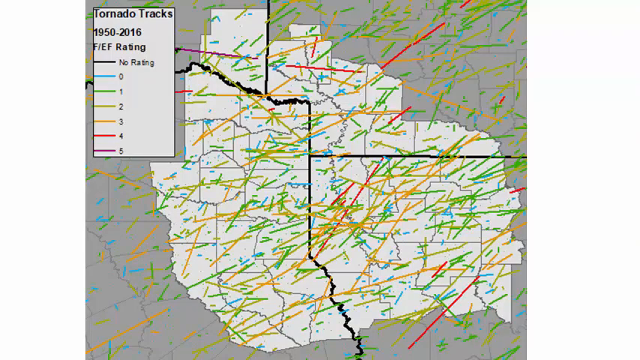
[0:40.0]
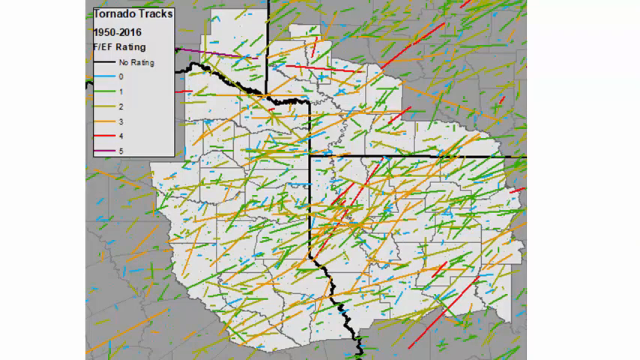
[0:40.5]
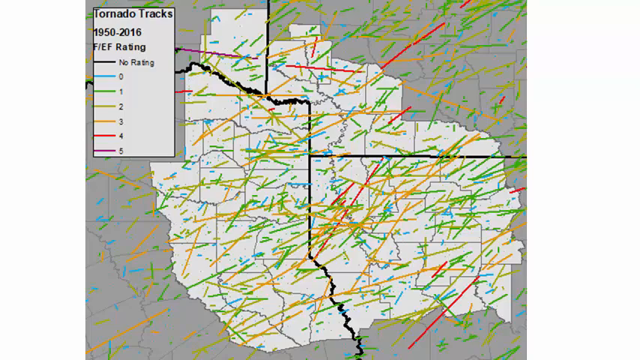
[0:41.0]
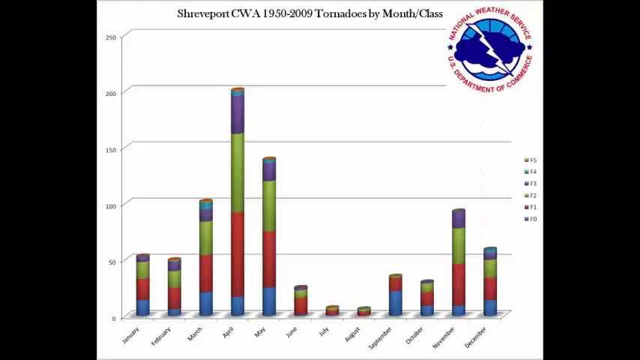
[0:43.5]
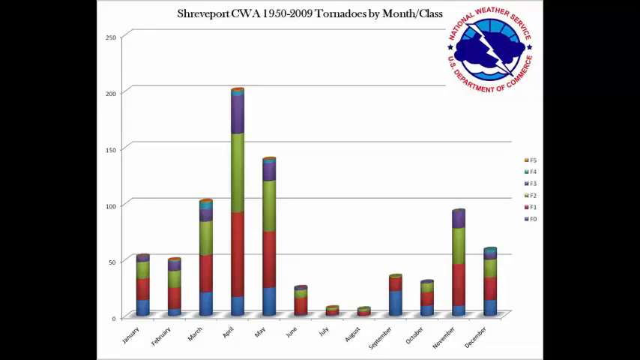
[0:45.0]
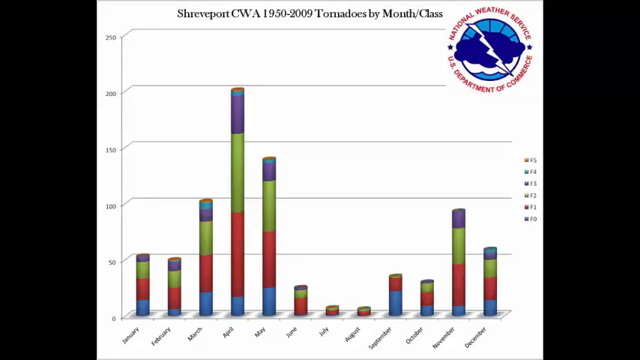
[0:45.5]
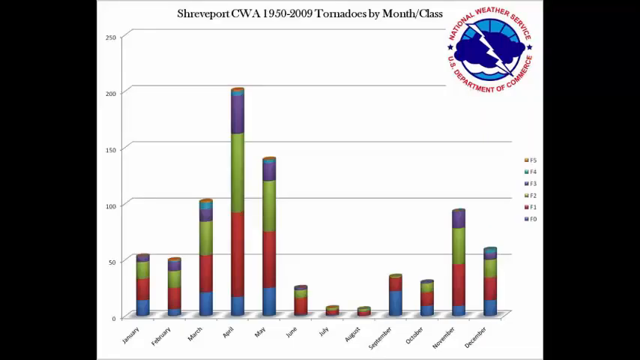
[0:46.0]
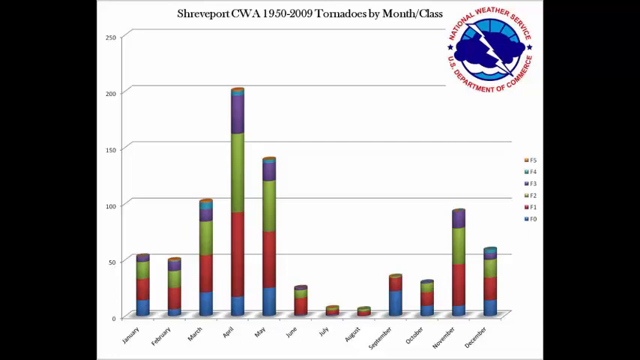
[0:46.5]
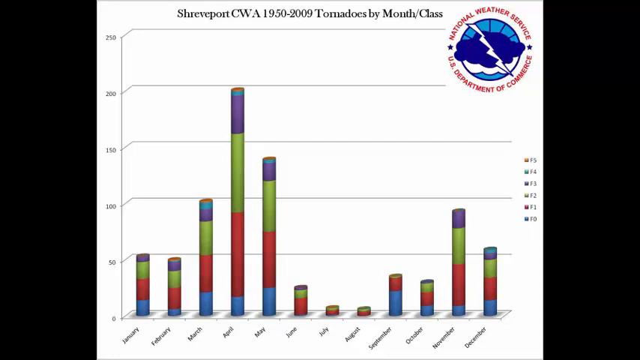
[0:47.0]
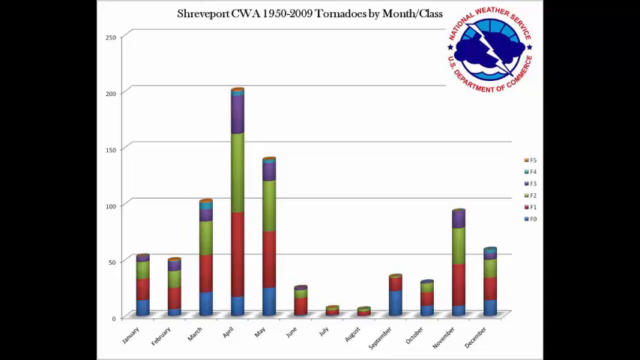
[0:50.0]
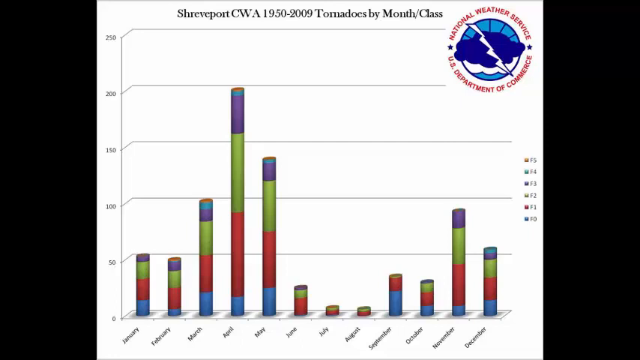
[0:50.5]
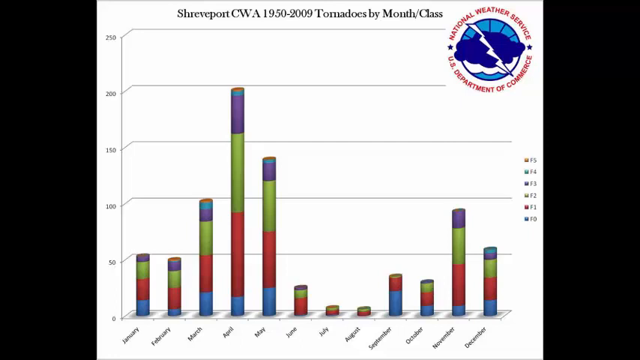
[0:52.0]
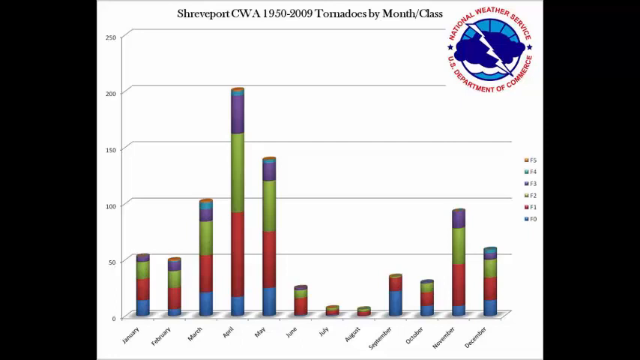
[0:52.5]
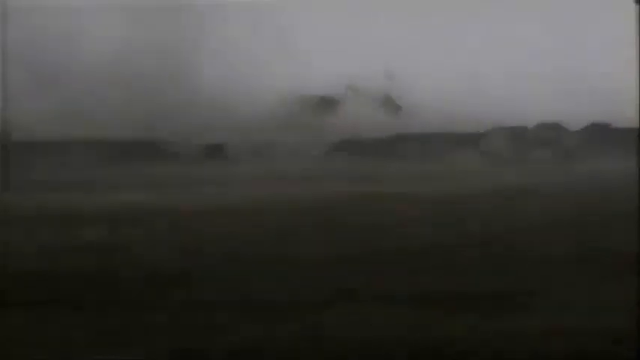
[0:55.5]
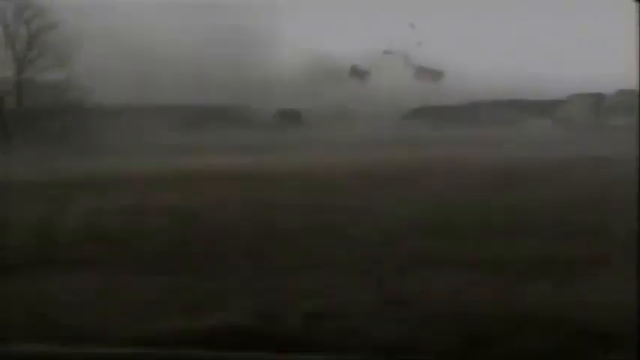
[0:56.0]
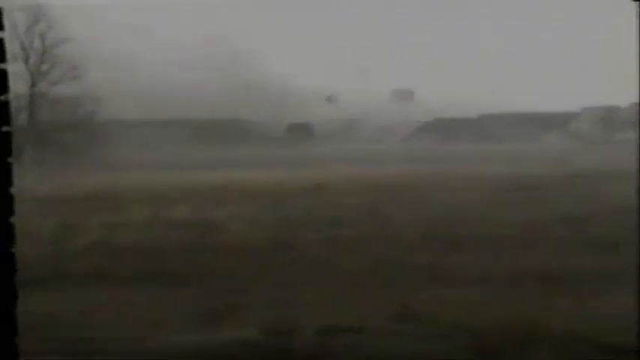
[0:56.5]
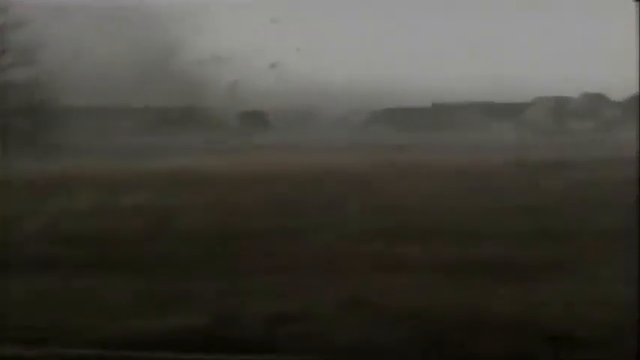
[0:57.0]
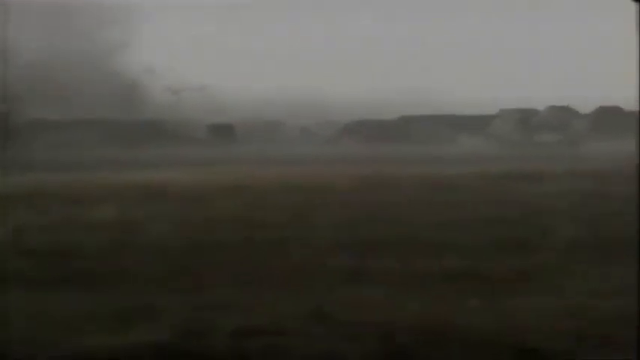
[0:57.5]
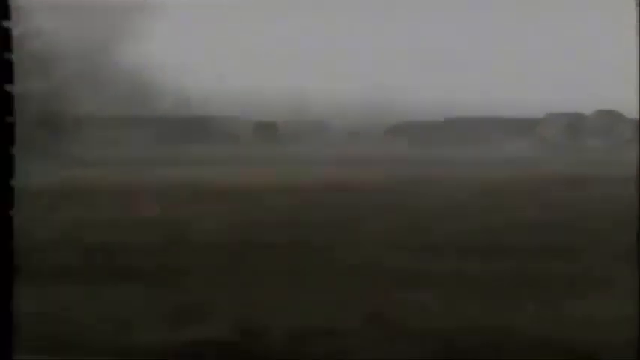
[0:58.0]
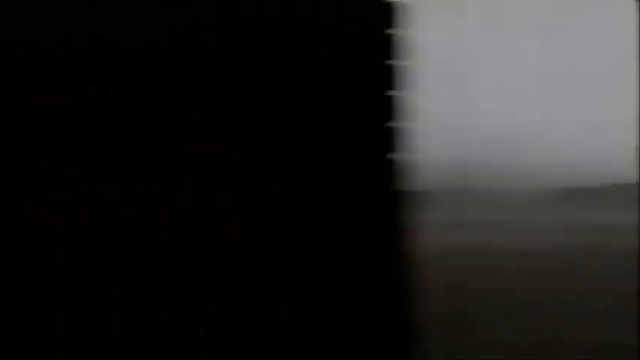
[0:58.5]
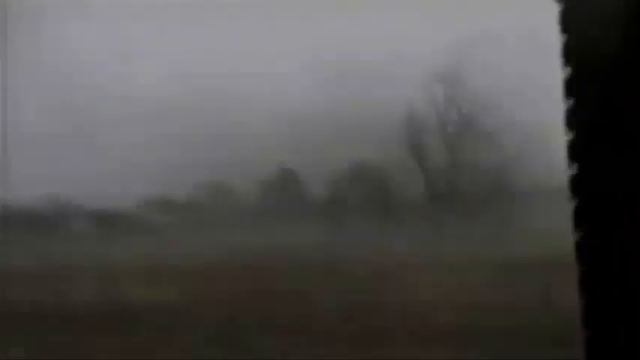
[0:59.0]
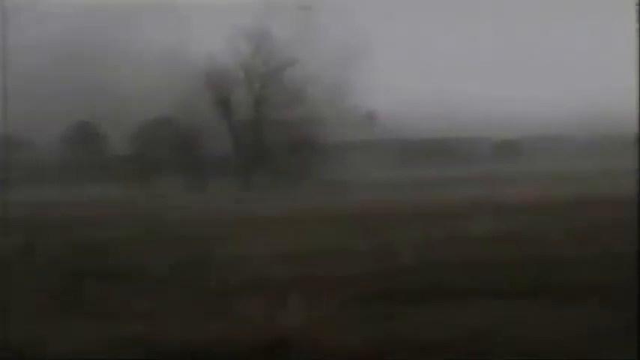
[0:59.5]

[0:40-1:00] The key, or legend, of the map is labeled "Tornado Tracks," with color coding for the tornado rankings from no ranking up to ES5, shown in a very dark red. These are all tornadoes between 1950 and 2016. The video then cuts to a bar graph labeled "Shreveport CWA 1950-2009 Tornadoes by Month/Class," with a key on the side of the screen indicating which color is which class; the graph is produced by the National Weather Service. Next comes footage of a tornado from a distance, starting to form. The screen is very blurry. This is a personal recording of a tornado, apparently made by somebody from their home. The tornado is very close to the house and keeps moving left on the screen, taking out trees, bushes and anything in its path.